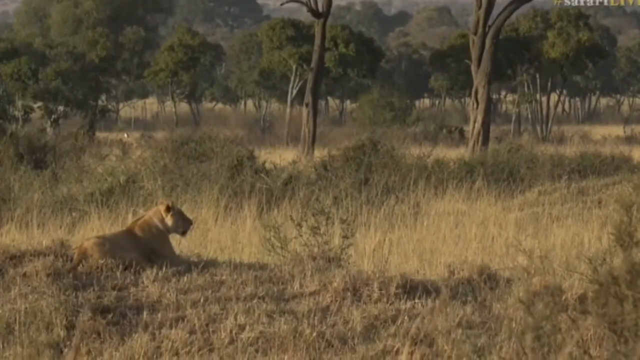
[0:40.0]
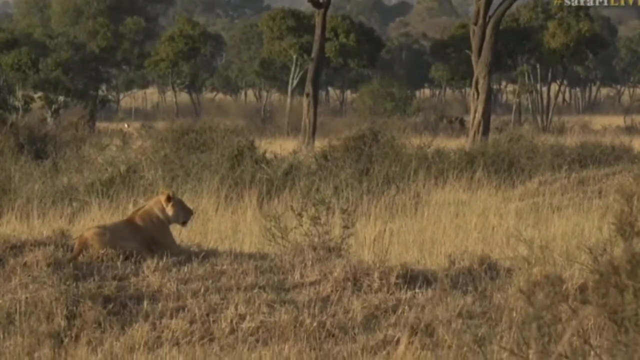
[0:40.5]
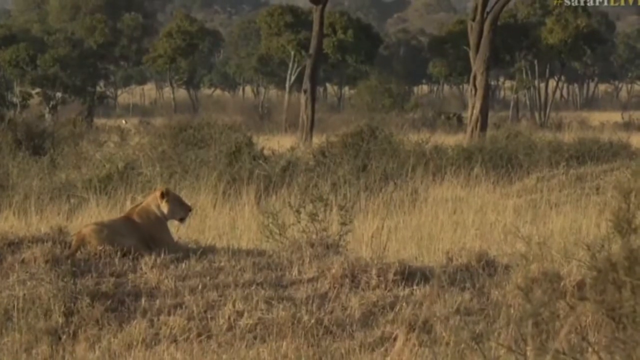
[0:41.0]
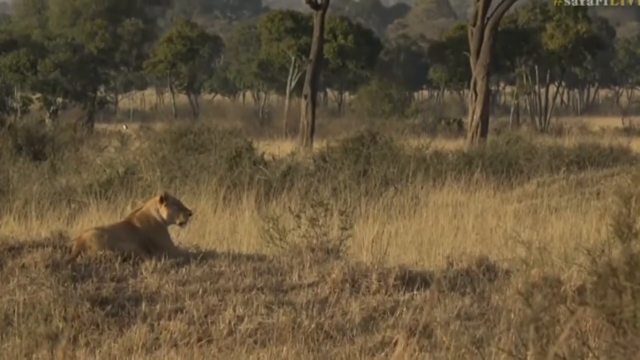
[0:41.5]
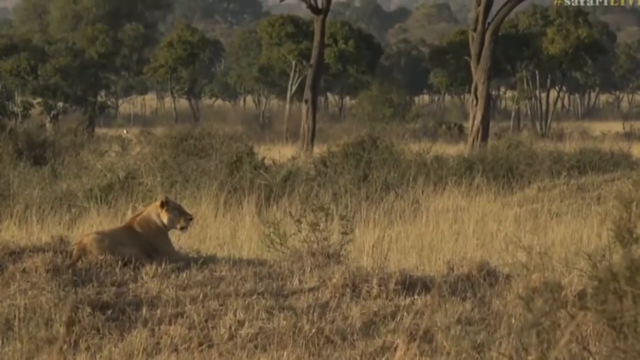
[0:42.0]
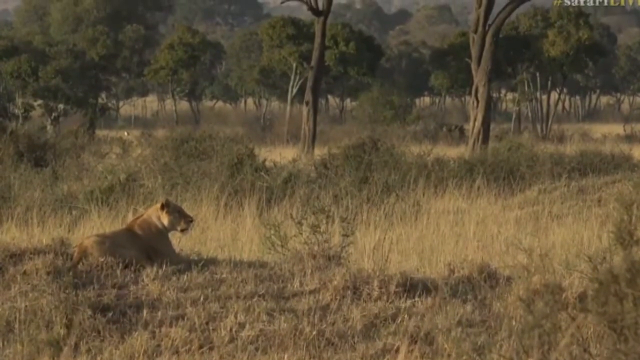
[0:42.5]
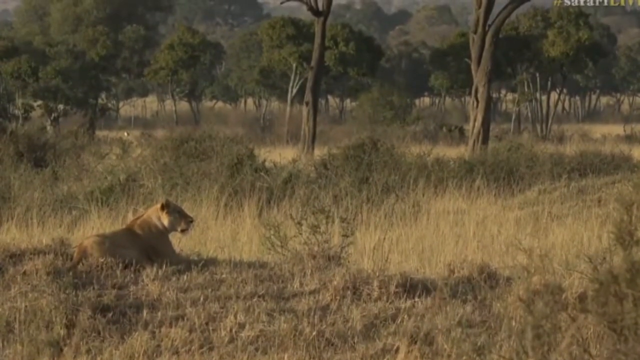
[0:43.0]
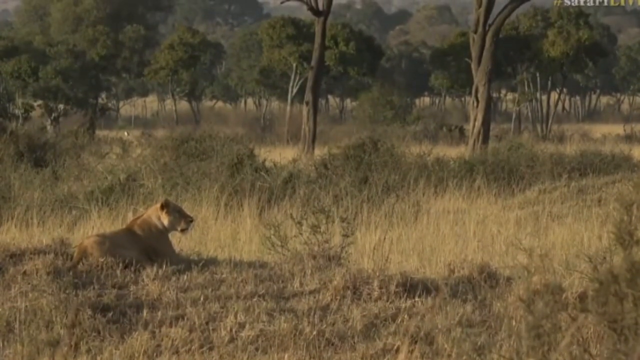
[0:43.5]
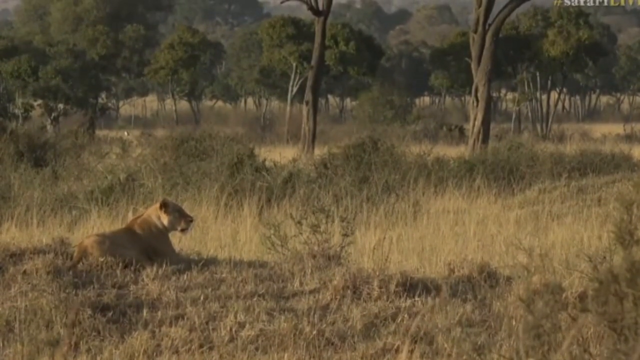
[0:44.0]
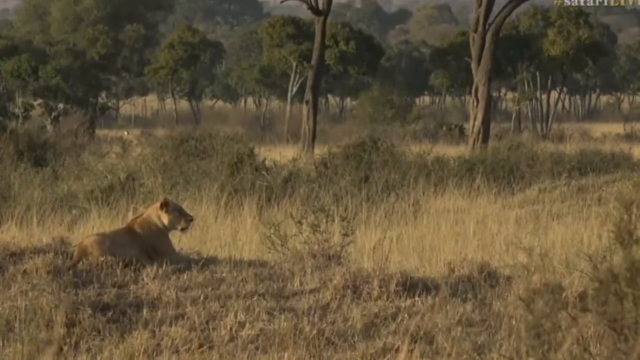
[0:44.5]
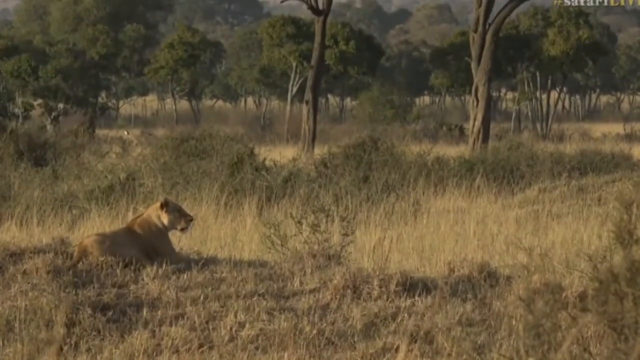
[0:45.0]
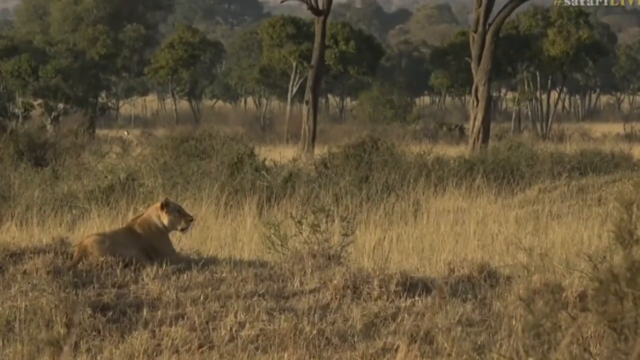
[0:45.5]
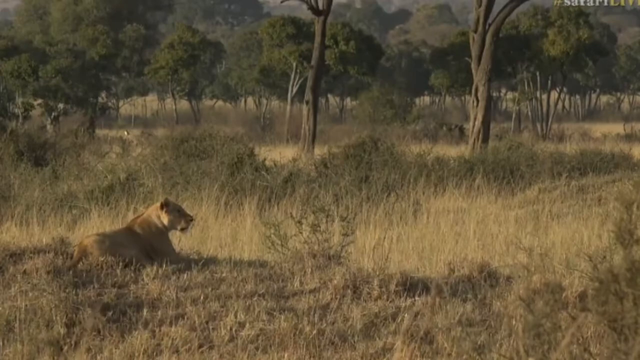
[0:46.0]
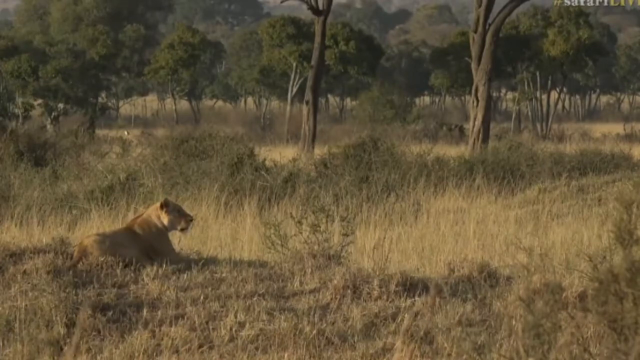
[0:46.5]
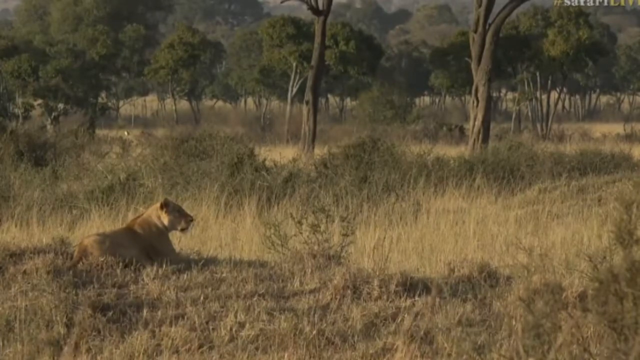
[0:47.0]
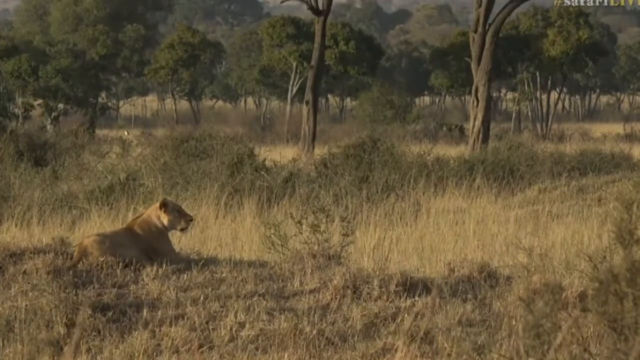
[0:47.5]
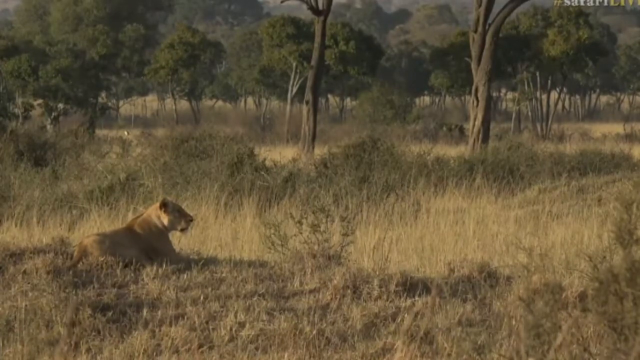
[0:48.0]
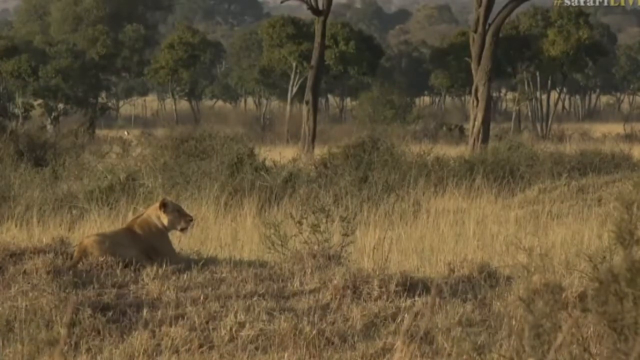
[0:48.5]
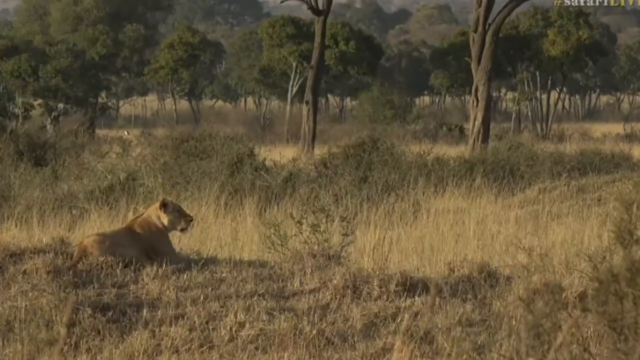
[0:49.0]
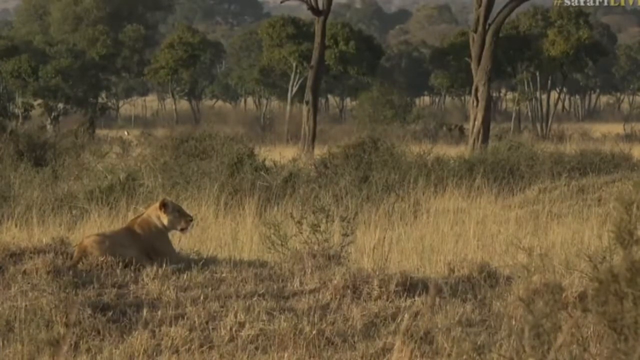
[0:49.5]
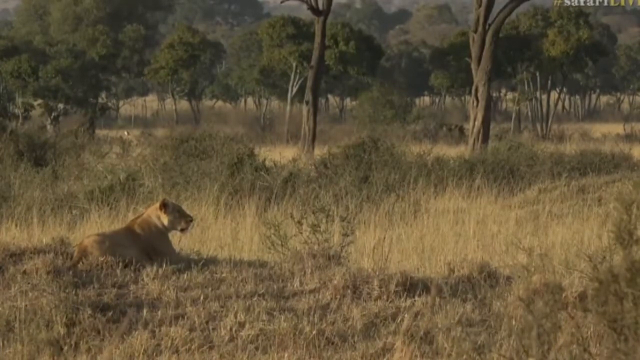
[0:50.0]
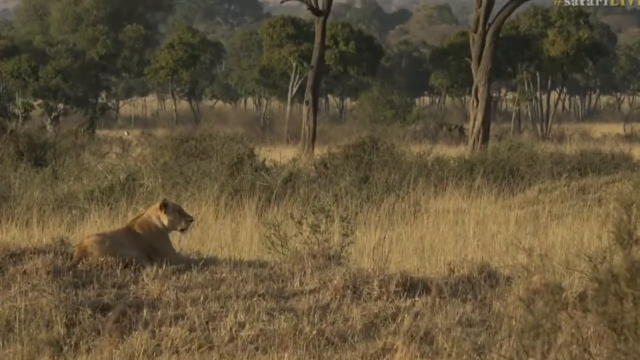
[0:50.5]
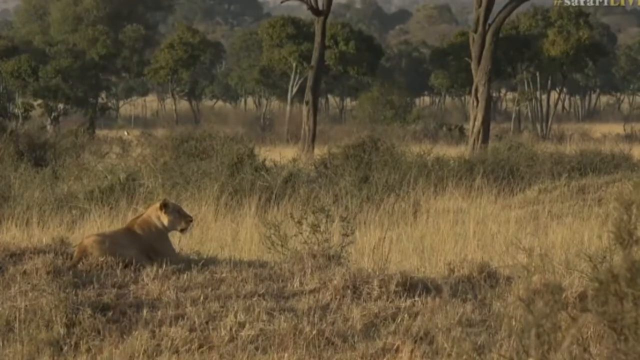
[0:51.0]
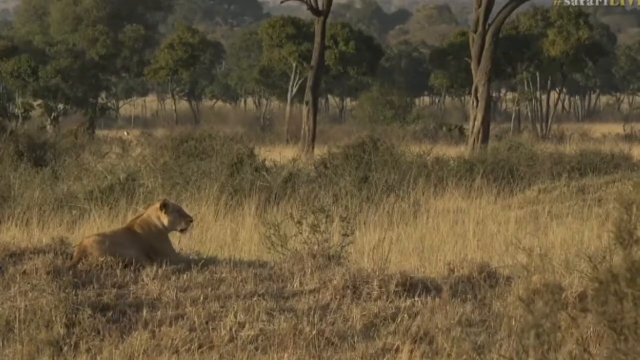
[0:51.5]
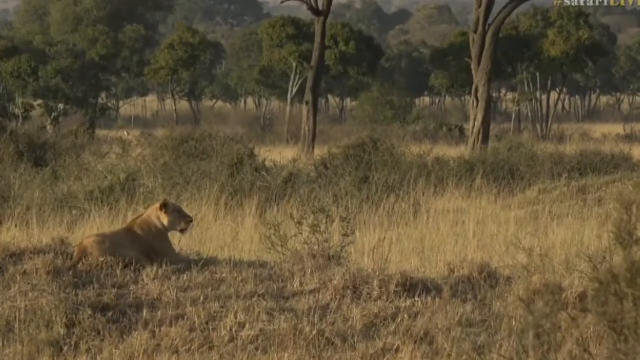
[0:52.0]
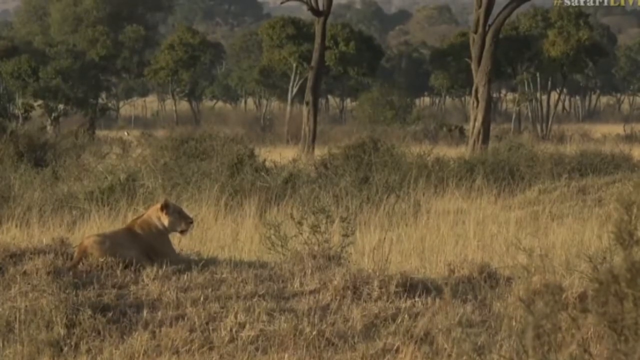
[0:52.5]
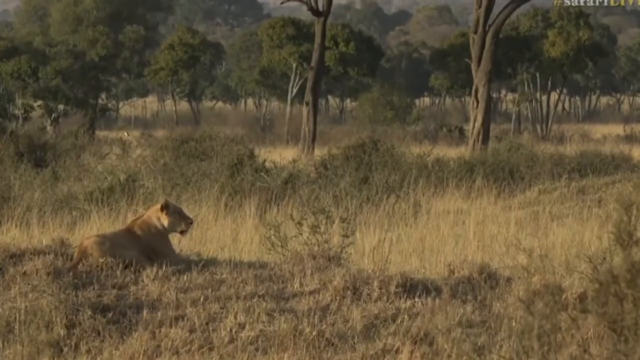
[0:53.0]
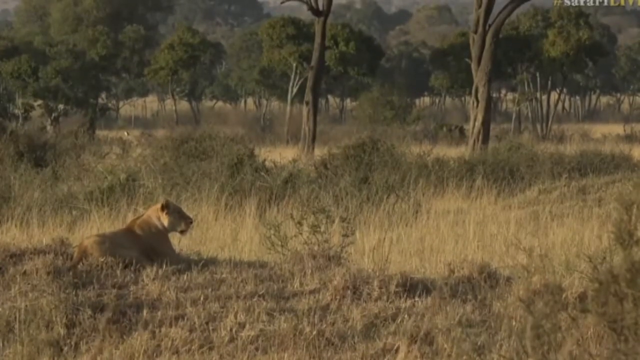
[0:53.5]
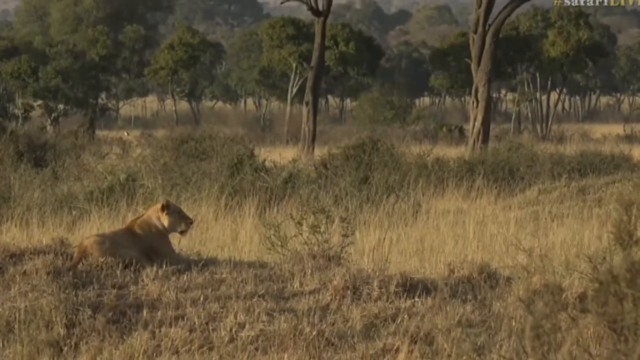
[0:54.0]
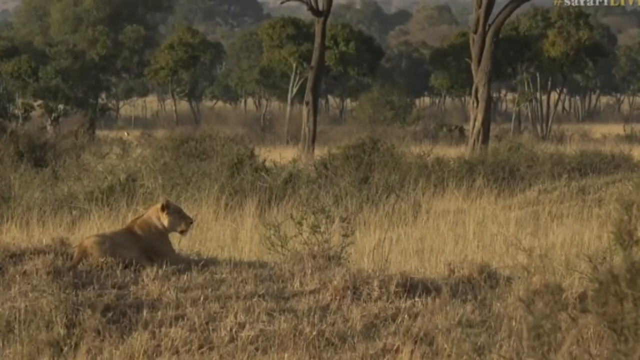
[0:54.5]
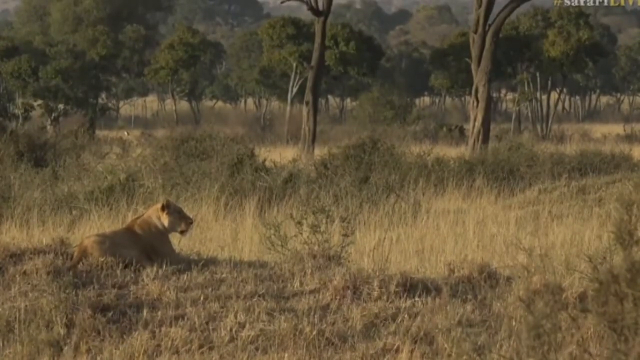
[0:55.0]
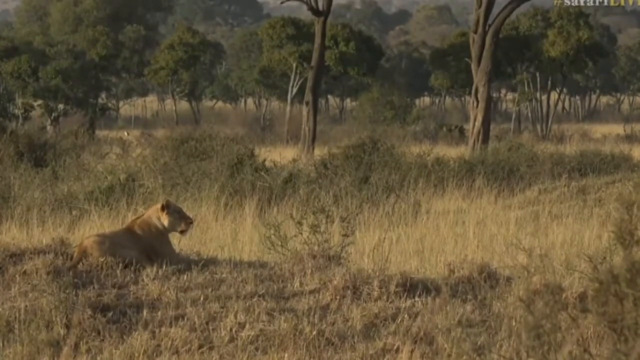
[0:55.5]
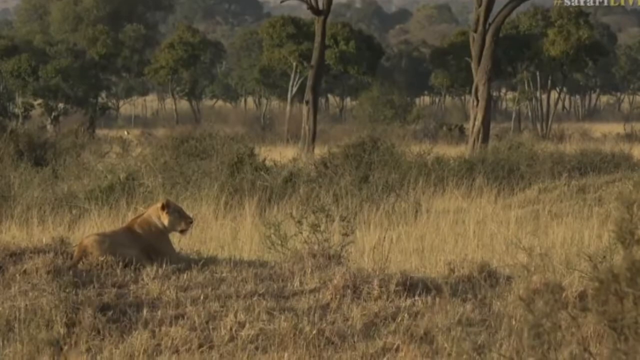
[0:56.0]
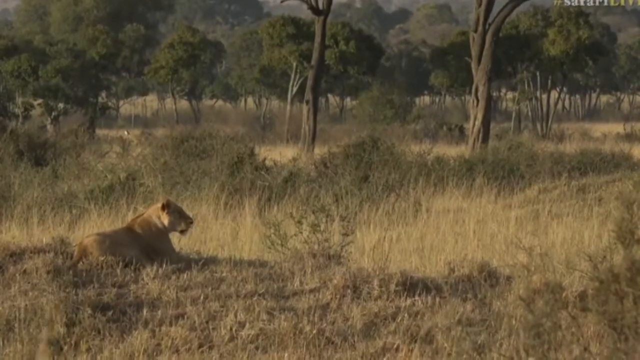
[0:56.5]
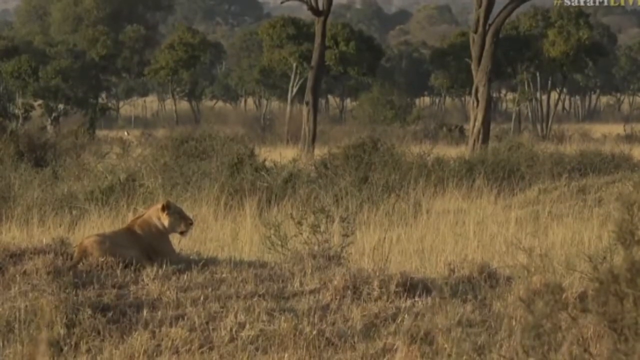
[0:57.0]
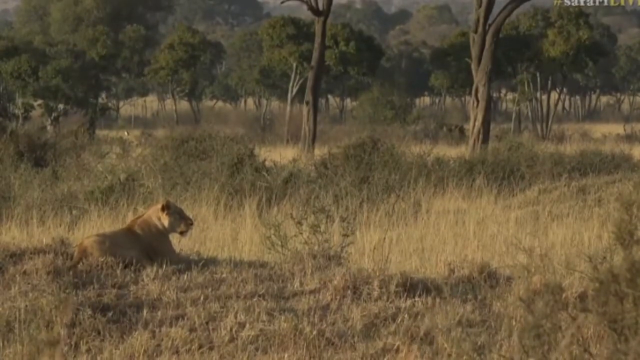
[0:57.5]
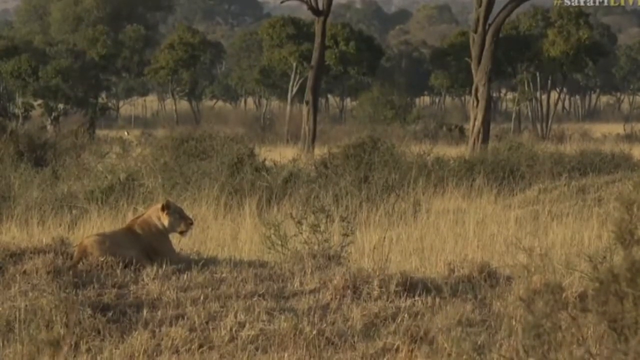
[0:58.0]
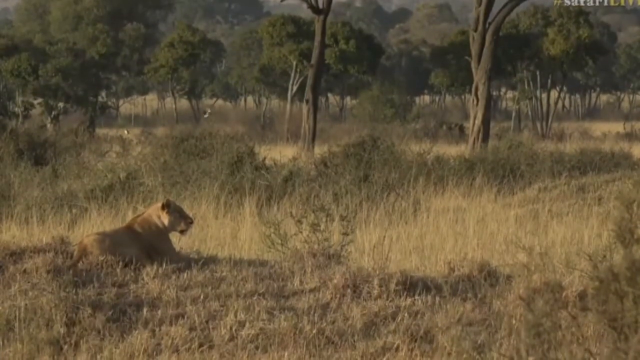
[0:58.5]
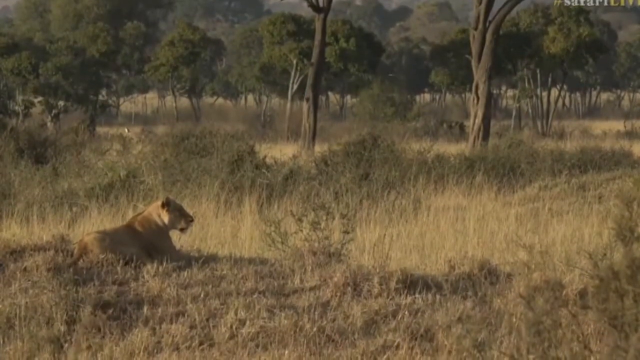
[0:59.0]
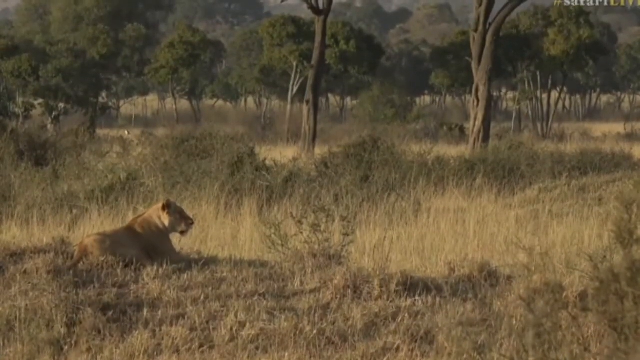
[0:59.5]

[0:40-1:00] A lioness rests on a mound of earth in an expansive area with trees, where everything is dry and it looks hot. She scans 180 degrees, from left to right and right to left. In the upper right corner of the screen is the word "safari". A couple of birds fly around just above the weed line. There are many mature trees, and trees continue into the distance. The lioness is brownish to golden in color and fairly big; she is lying down on the mound of earth with her head up. The mound is almost like a throne, sitting up a bit from the surrounding land so she can see everything. It is a sunny day and it looks hot.